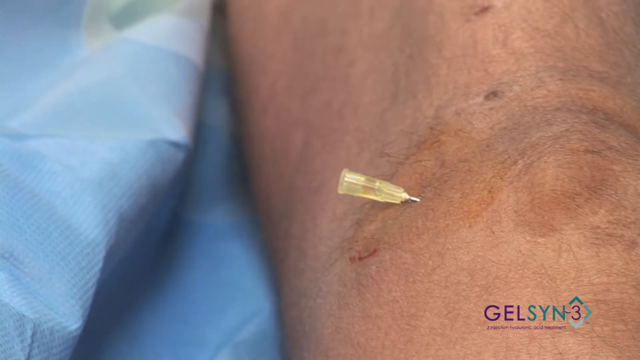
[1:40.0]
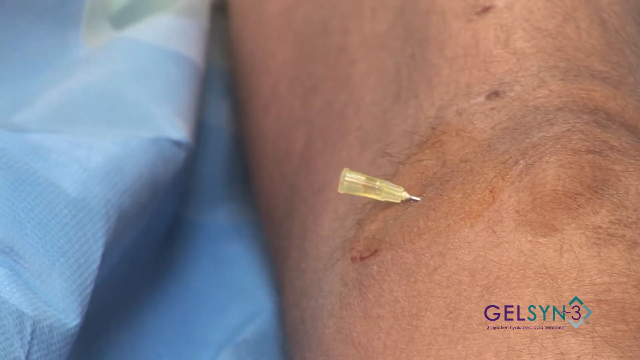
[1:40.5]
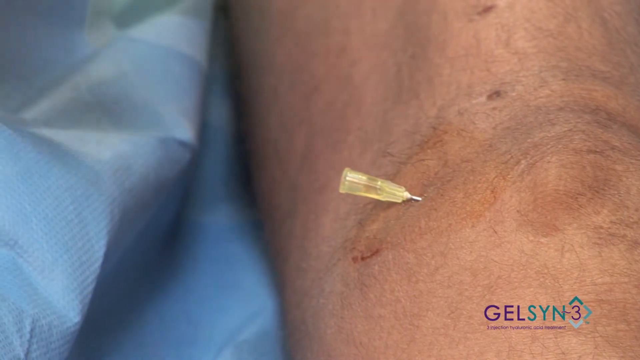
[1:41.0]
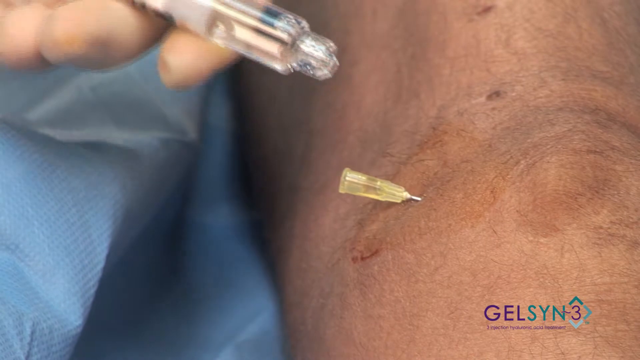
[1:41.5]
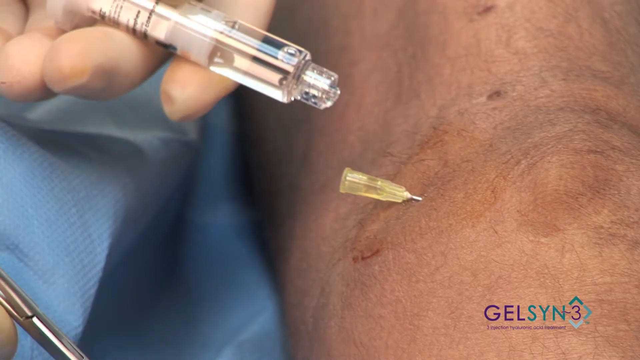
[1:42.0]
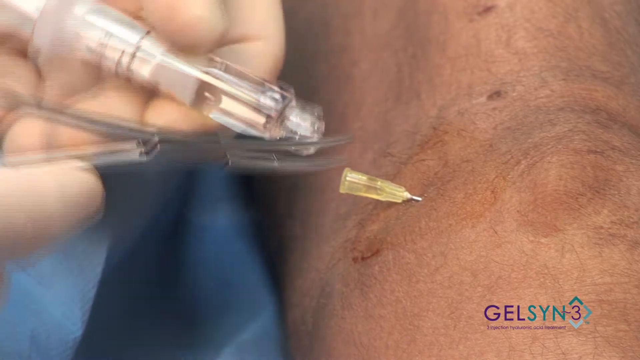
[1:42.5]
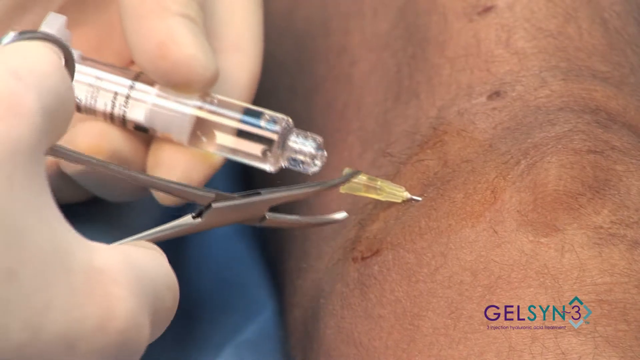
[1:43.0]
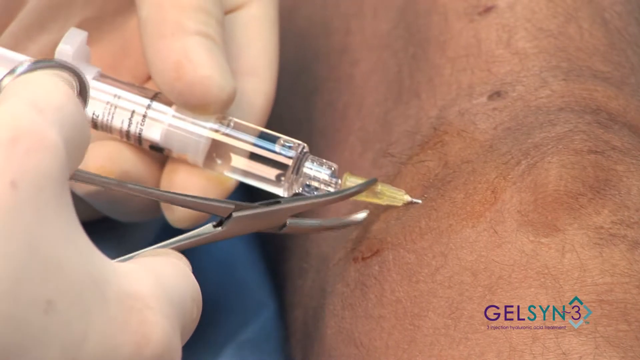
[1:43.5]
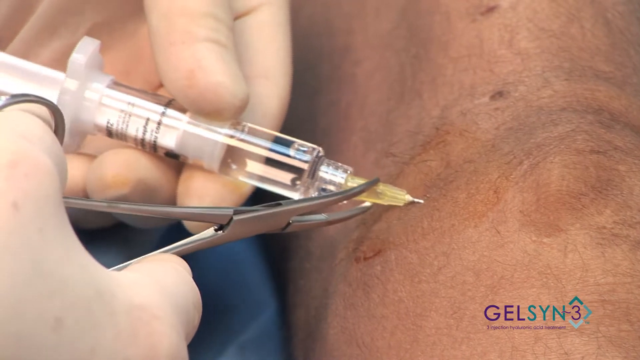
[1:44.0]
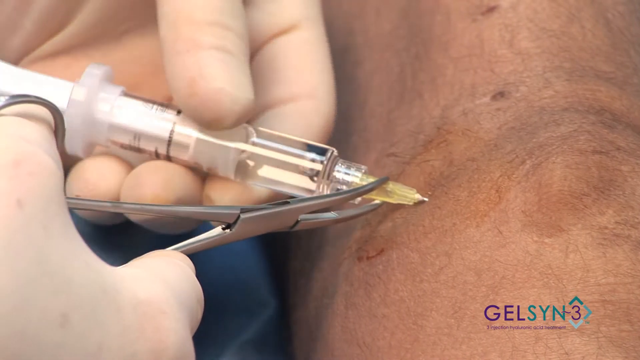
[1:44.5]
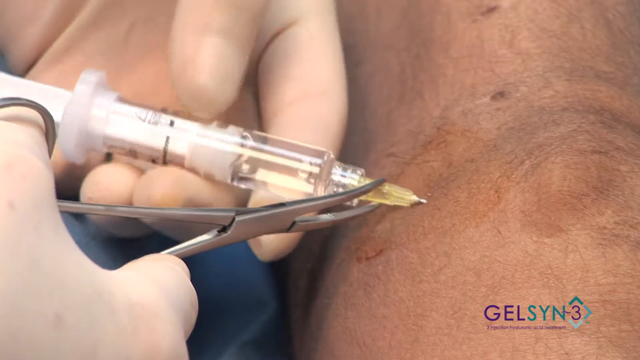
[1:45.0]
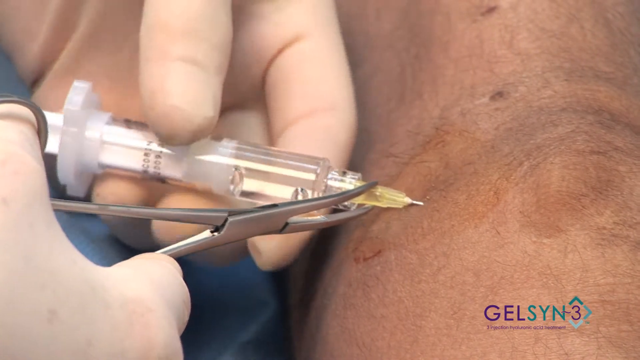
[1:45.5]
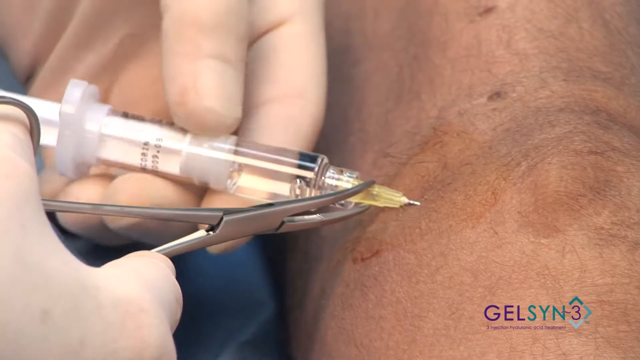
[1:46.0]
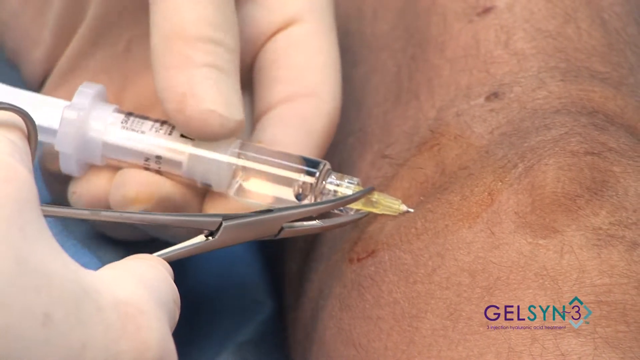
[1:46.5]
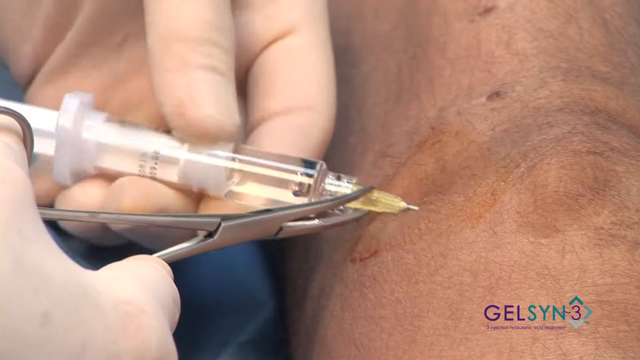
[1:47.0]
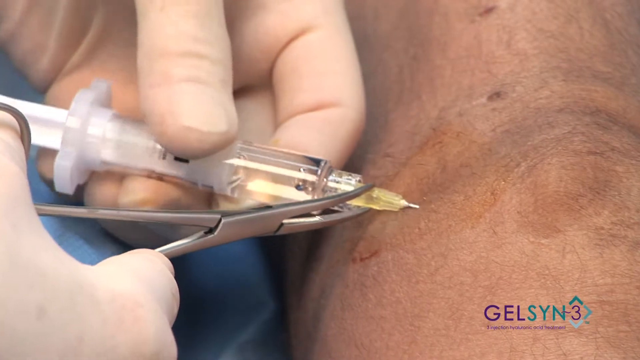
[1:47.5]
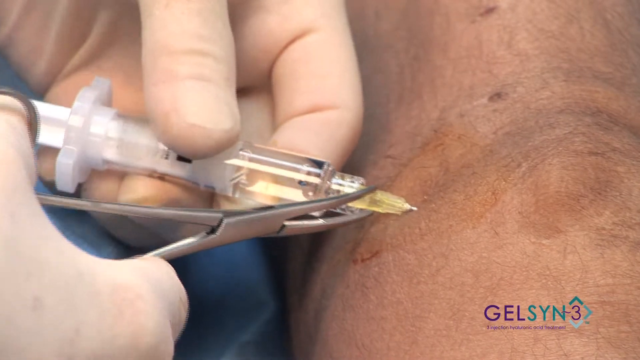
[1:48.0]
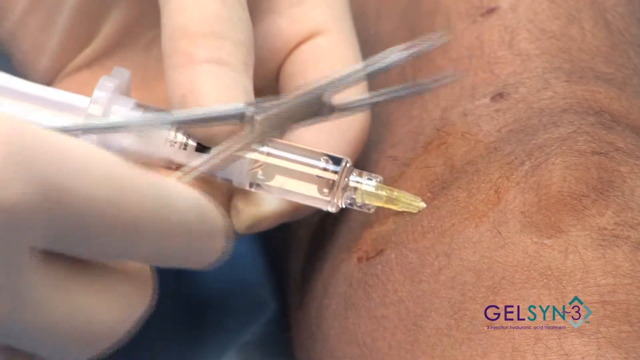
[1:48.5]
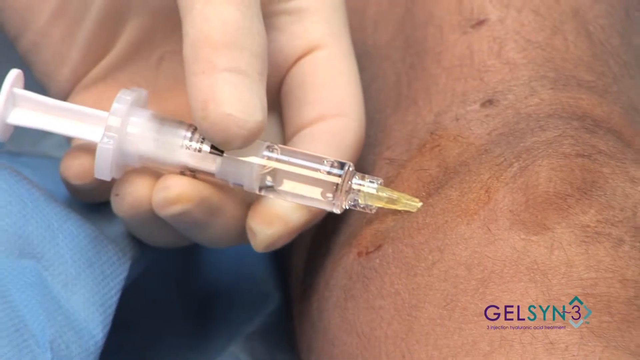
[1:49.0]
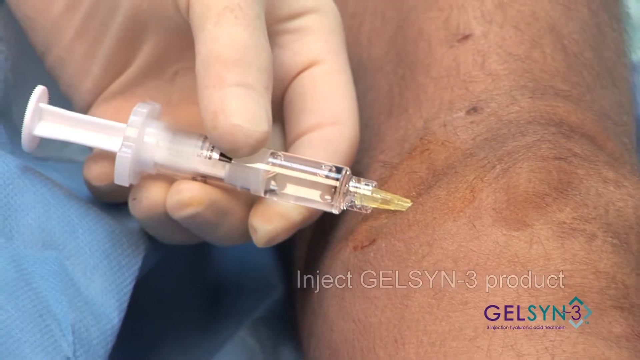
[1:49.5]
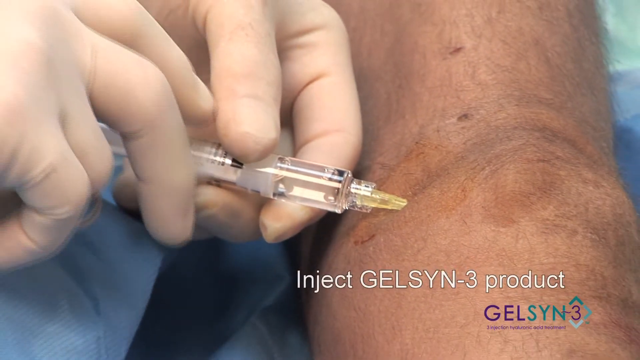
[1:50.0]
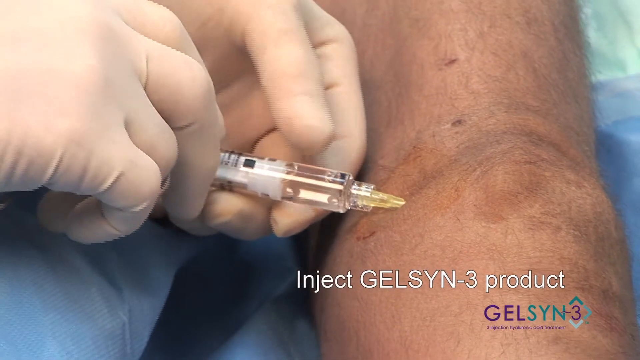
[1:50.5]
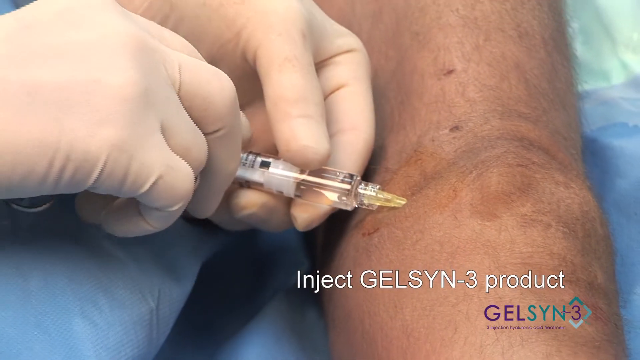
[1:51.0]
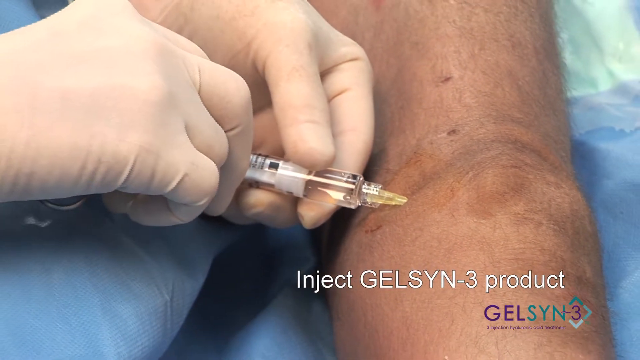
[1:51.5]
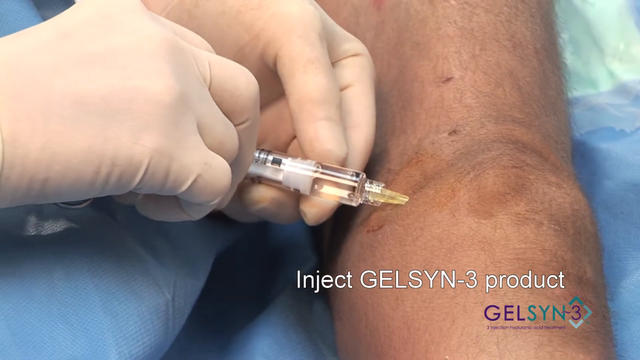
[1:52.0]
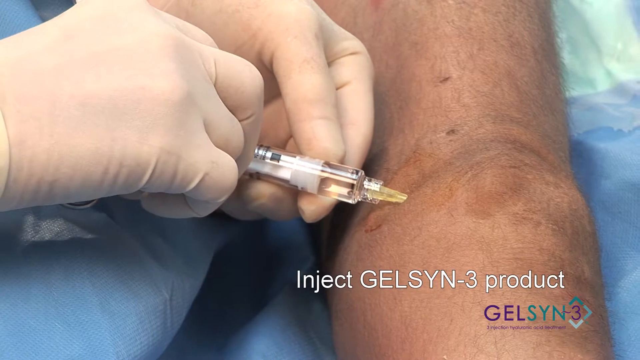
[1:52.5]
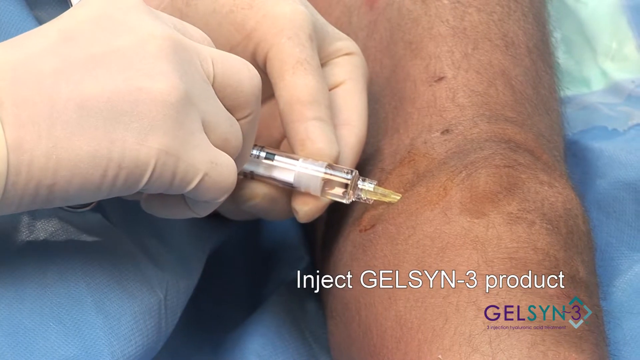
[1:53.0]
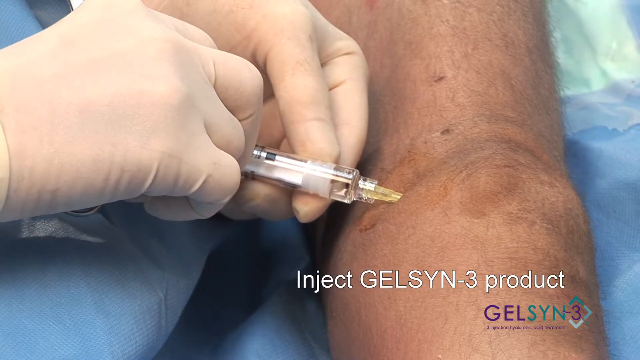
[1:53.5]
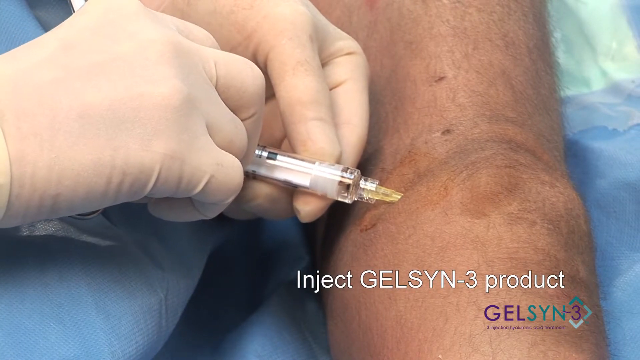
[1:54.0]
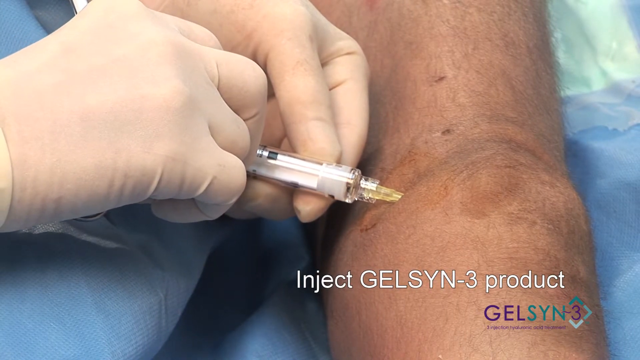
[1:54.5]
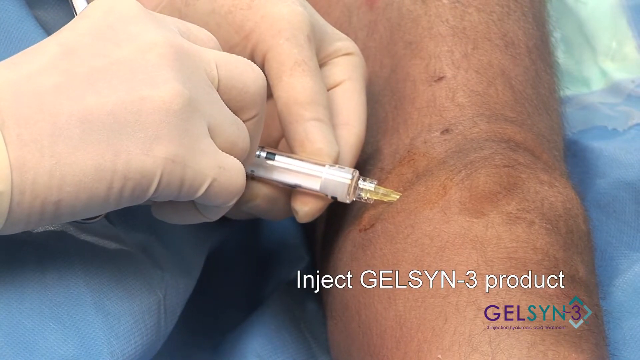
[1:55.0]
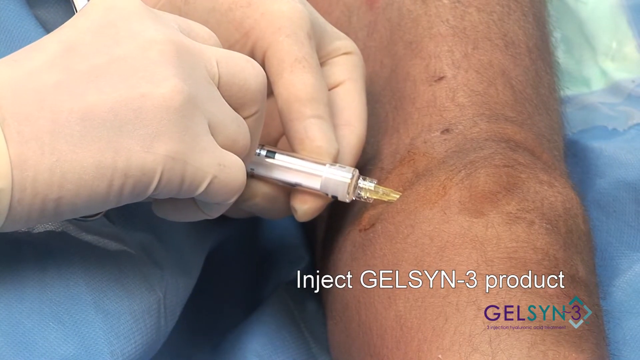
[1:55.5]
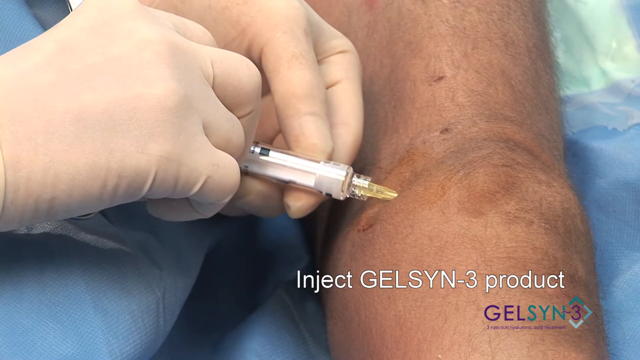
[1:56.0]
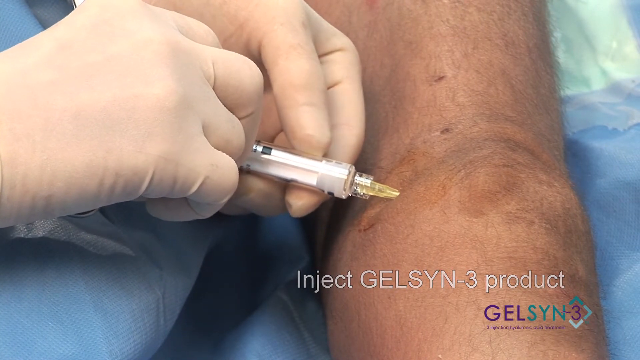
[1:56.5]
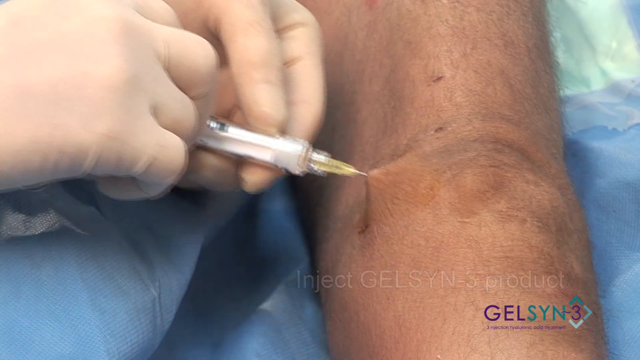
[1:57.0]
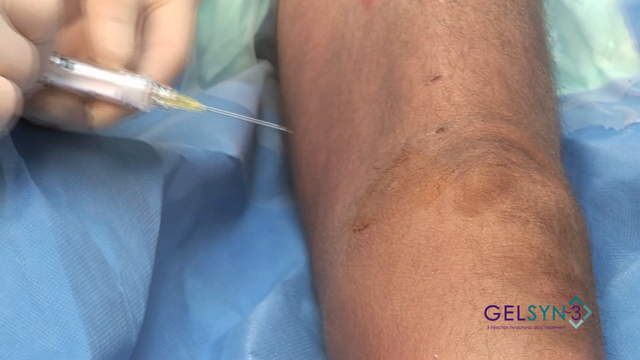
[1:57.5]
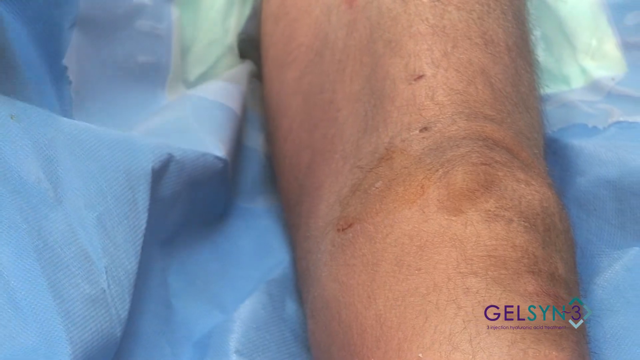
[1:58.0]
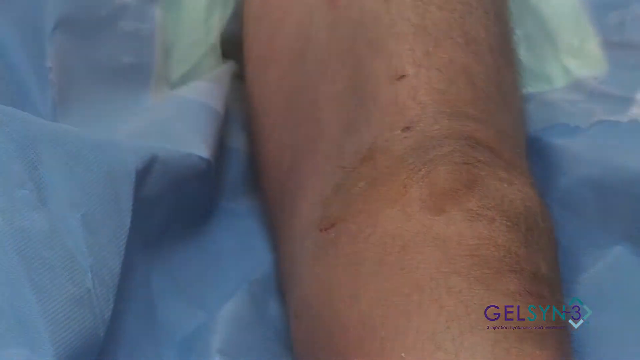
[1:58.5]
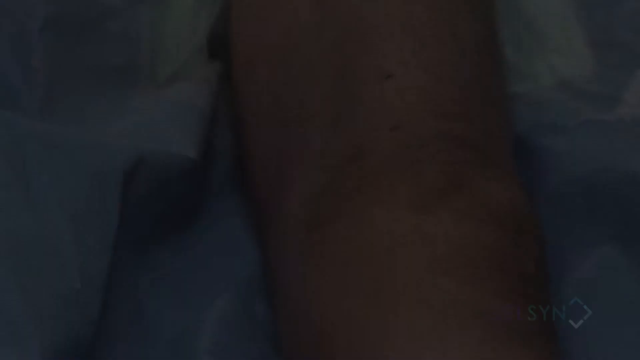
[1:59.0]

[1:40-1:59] With the small plastic tip left in the knee, the gloved hands return, using the scissors seemingly not to cut but to grasp, almost like tweezers. The right hand grasps the tip hanging out of the knee, and the left hand apparently takes a different syringe, which appears to contain some liquid, and screws it onto the same end, so the tip apparently stays in place while the syringes are switched. The right hand then pushes the liquid into the knee while the left hand holds the syringe steady, and white text in the lower right reads "inject Gelsyn 3 Product." After the injection is complete, the gloved hands pull the needle out of the knee, leaving just the knee in frame with nothing in it.